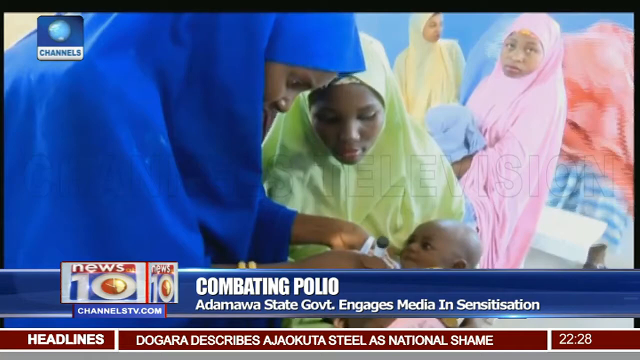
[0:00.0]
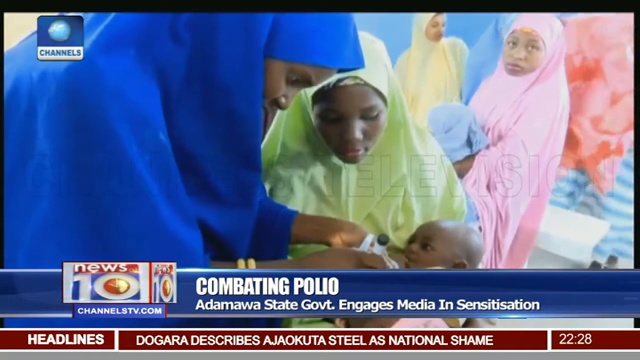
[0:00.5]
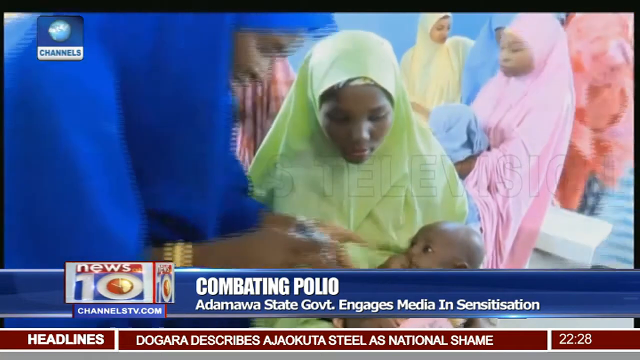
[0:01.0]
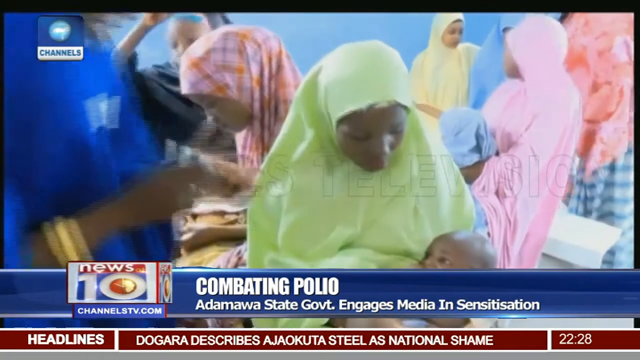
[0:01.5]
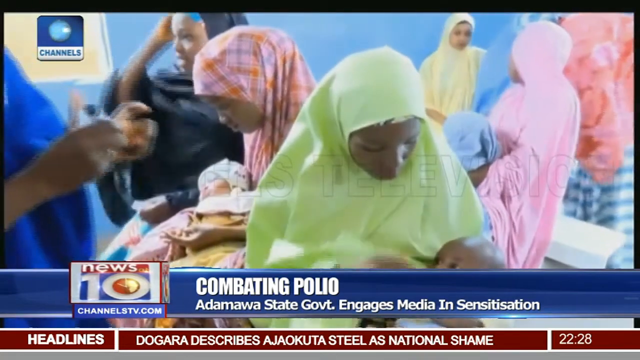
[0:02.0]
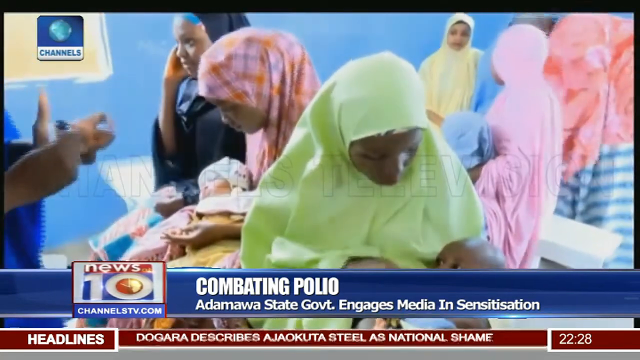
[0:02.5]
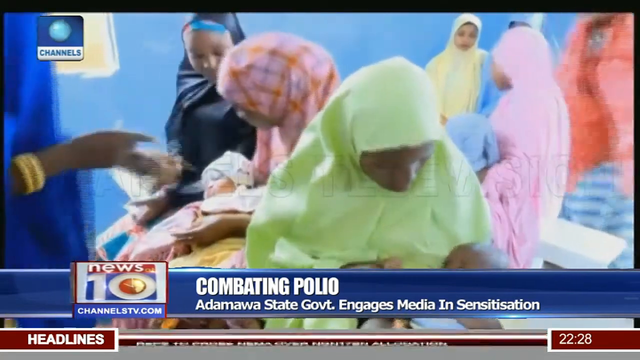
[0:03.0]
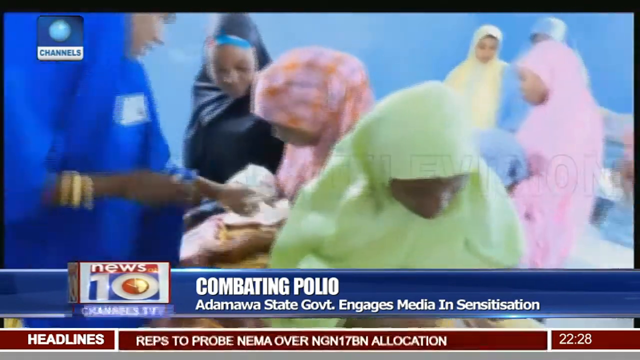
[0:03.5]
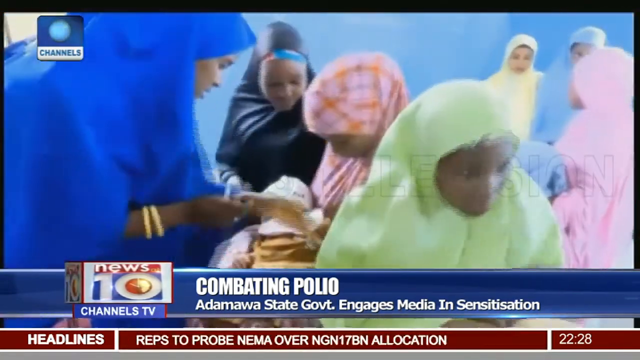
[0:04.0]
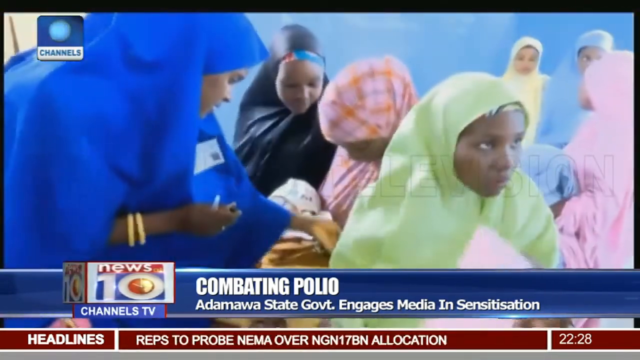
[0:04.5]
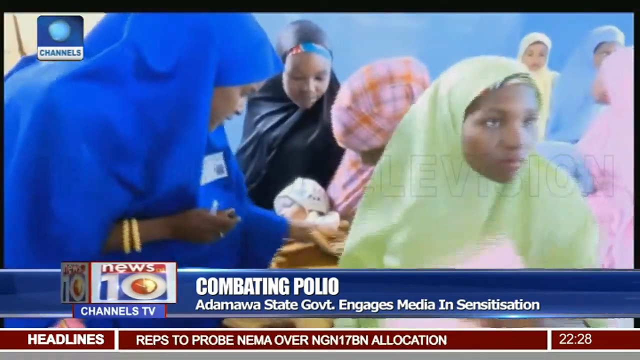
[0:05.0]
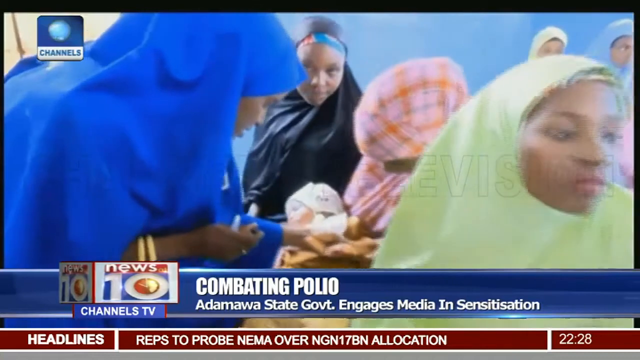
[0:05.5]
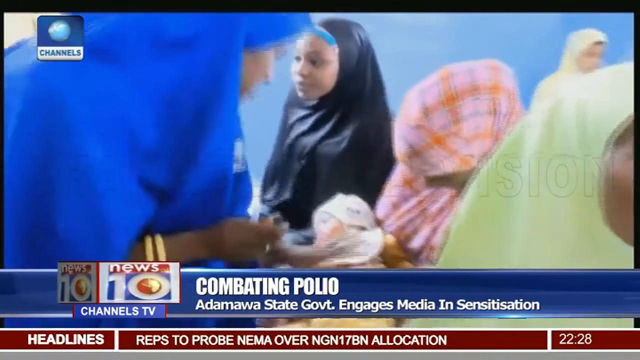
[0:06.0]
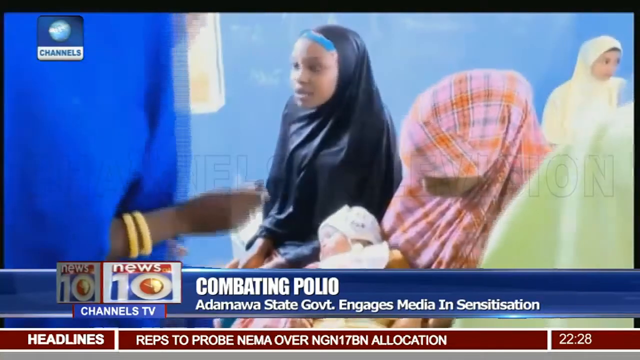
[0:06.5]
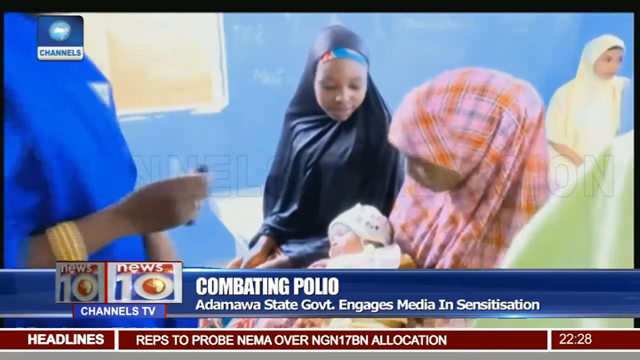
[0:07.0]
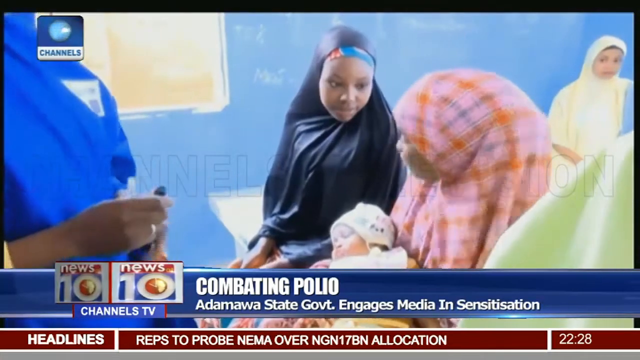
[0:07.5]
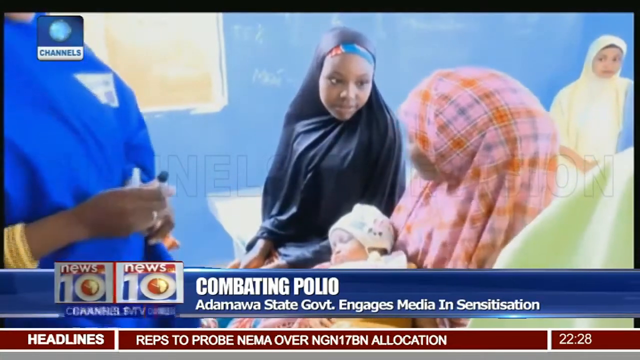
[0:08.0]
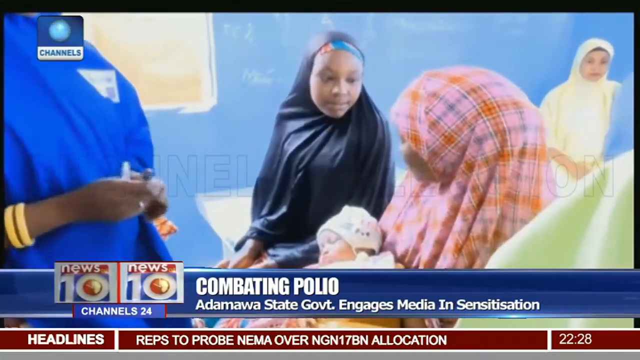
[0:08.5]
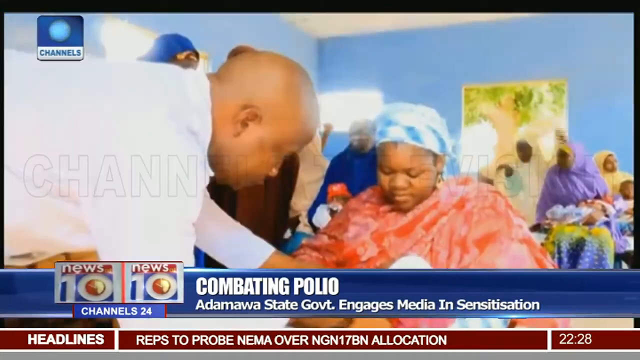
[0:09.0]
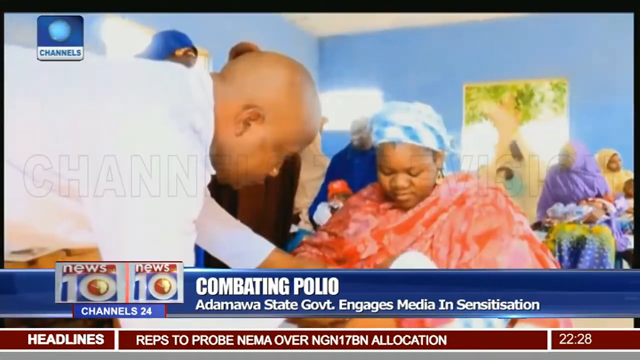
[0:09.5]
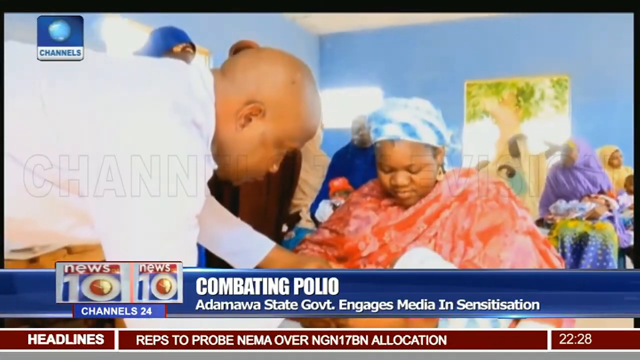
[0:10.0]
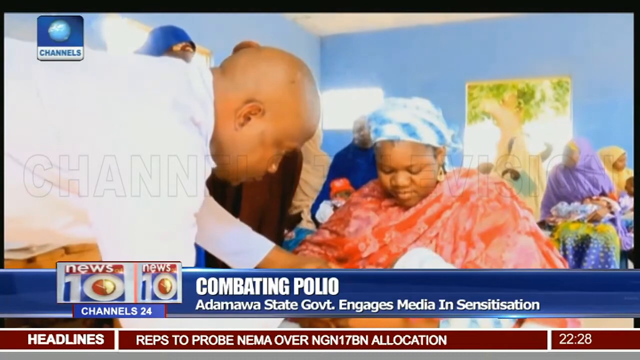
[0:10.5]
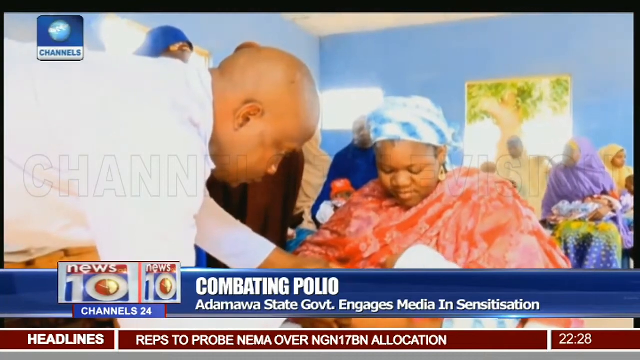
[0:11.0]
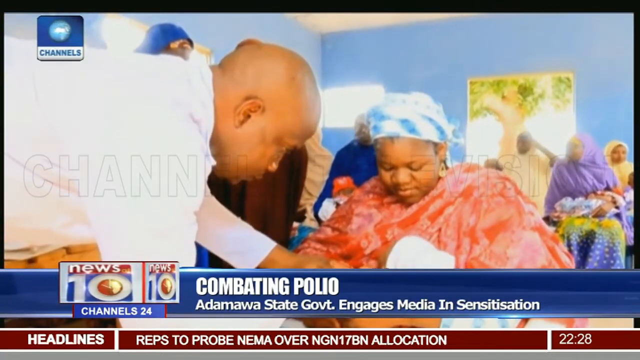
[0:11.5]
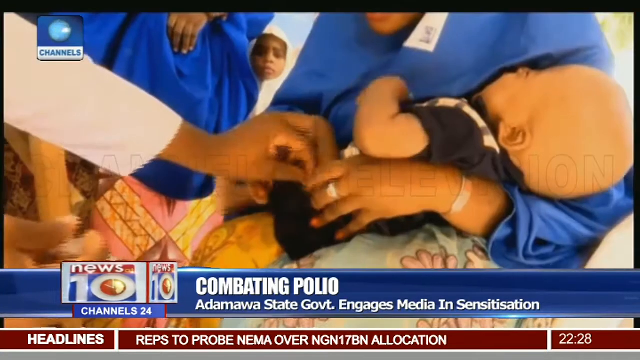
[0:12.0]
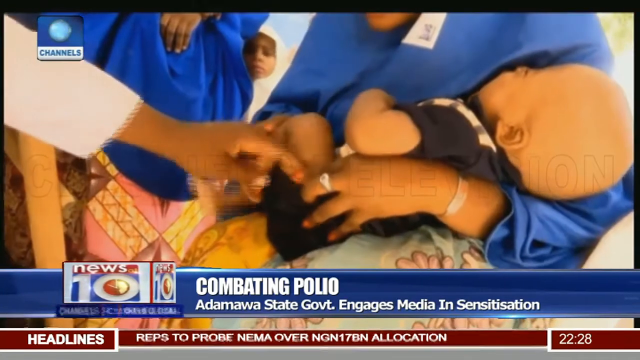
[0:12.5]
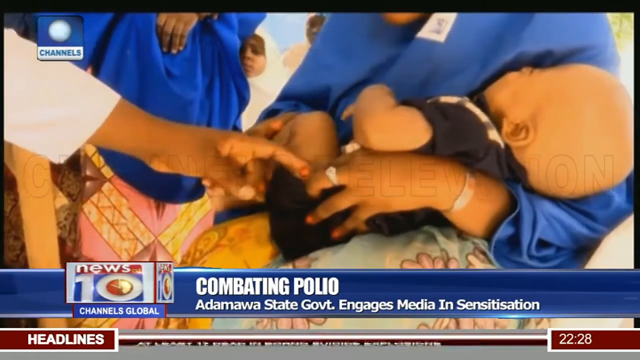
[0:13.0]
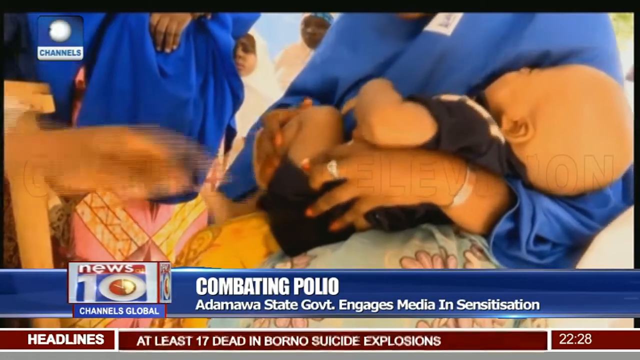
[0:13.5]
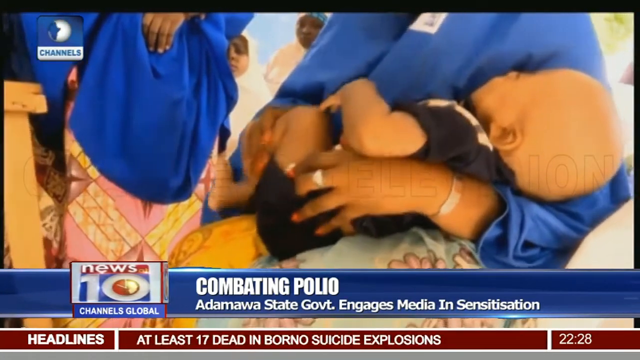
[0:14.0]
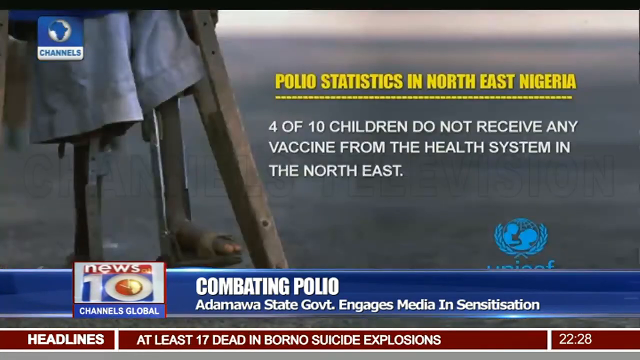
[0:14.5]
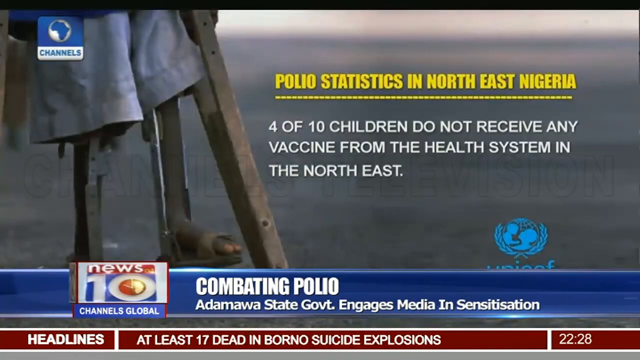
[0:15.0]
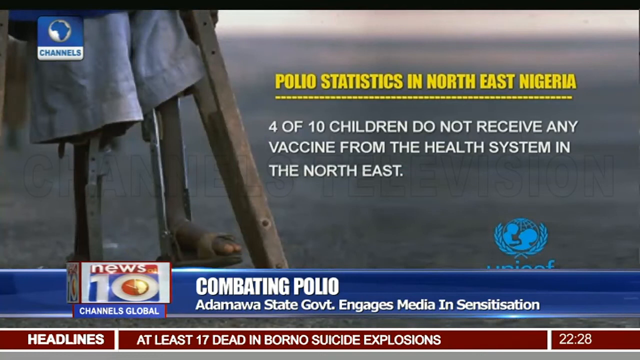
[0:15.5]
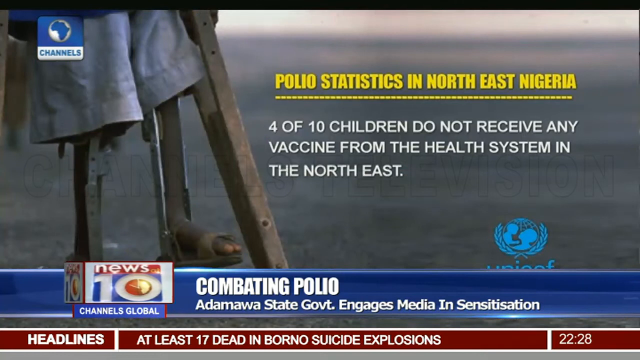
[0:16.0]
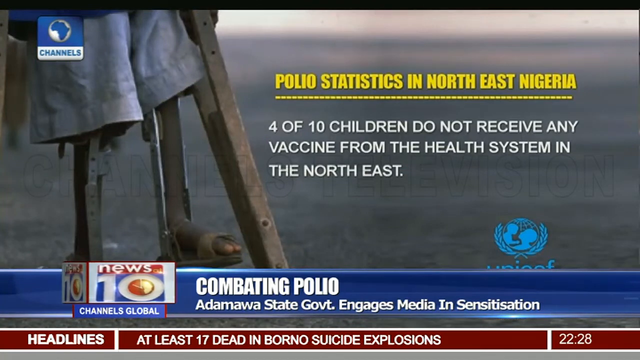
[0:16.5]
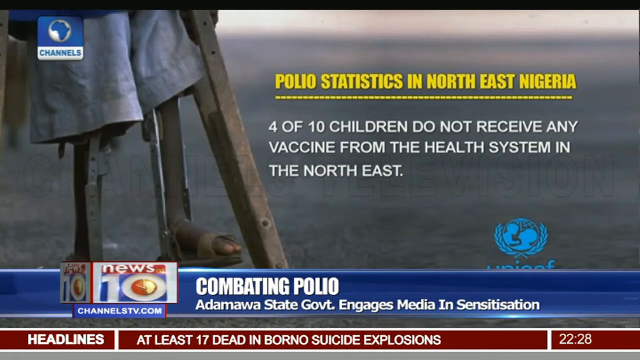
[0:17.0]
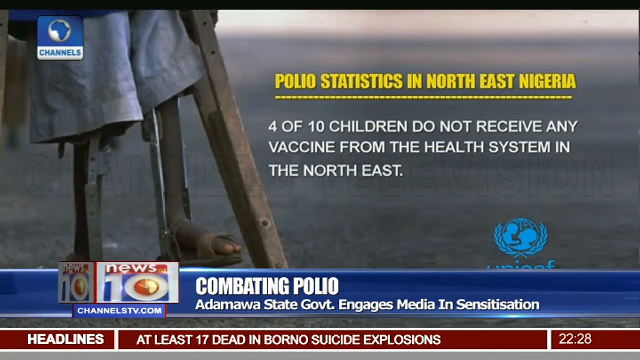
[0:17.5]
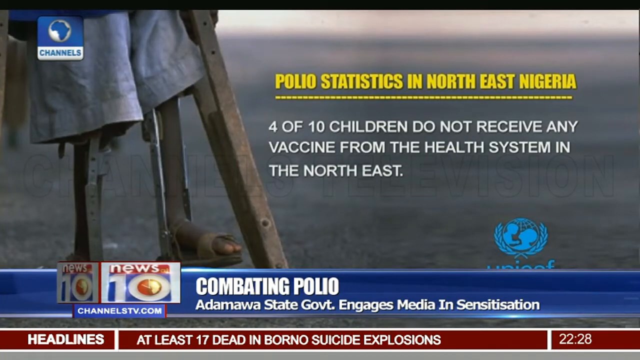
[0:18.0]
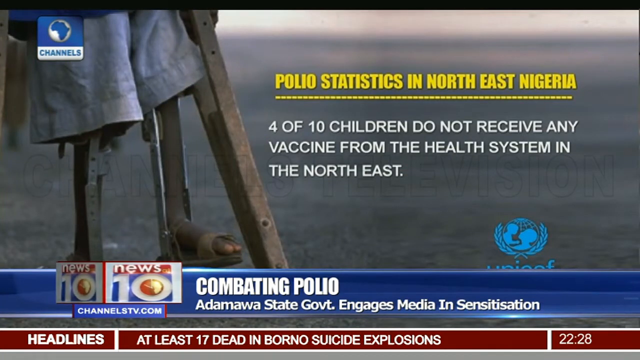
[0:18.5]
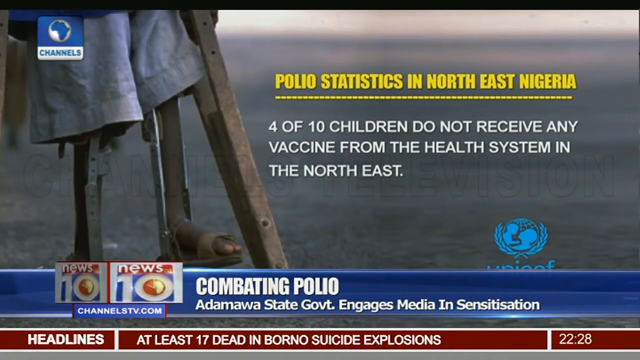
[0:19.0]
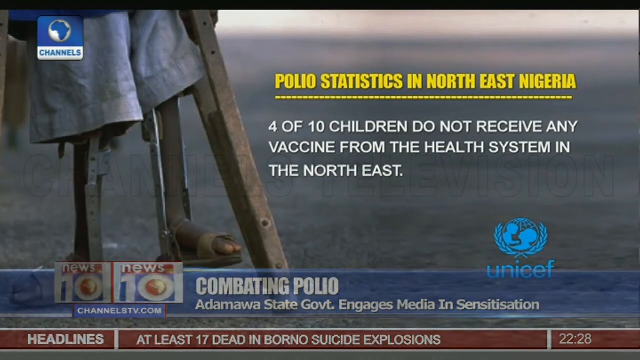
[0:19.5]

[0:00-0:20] A news report from the channels covers efforts to combat polio through immunization of children. On-screen text reads "polio statistics in north east Nigeria" and states that "4 of 10 children do not receive any vaccine from the health system in the northeast." Pictures of disabled children are shown, along with pictures of children being helped and vaccinated. The report comes from News 10 and concerns combating polio by the Atamawa state government, which engages the media in sensitization. Children are shown being vaccinated.